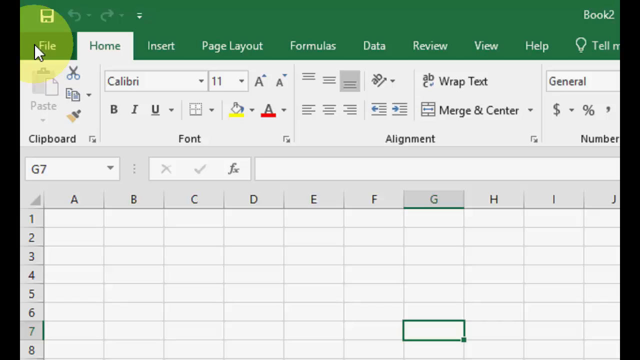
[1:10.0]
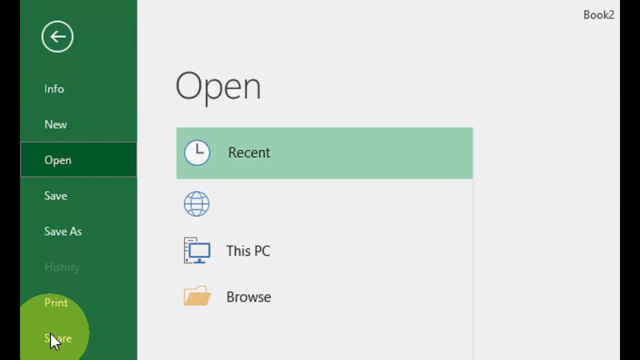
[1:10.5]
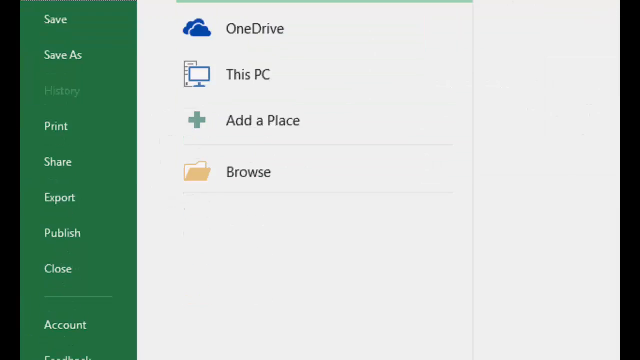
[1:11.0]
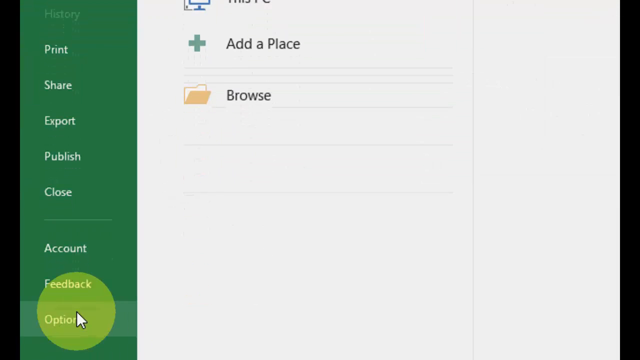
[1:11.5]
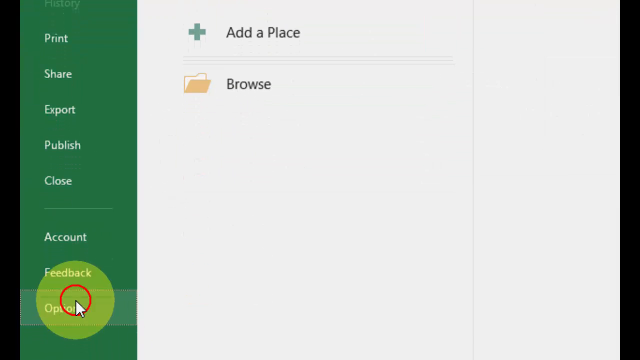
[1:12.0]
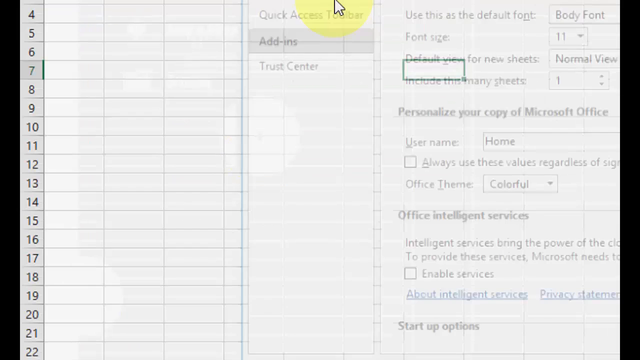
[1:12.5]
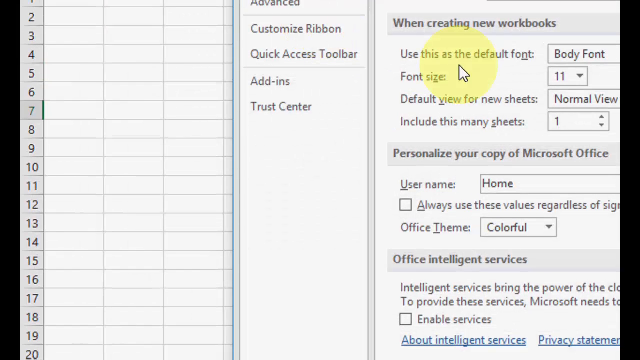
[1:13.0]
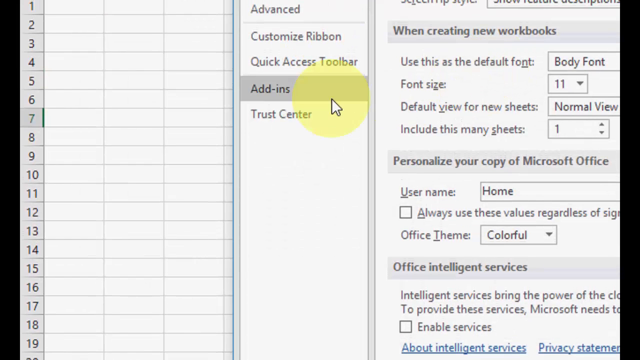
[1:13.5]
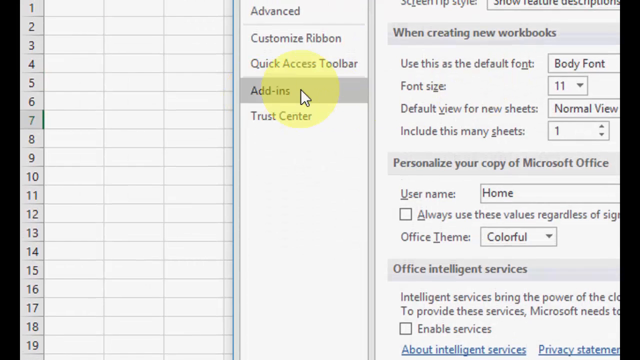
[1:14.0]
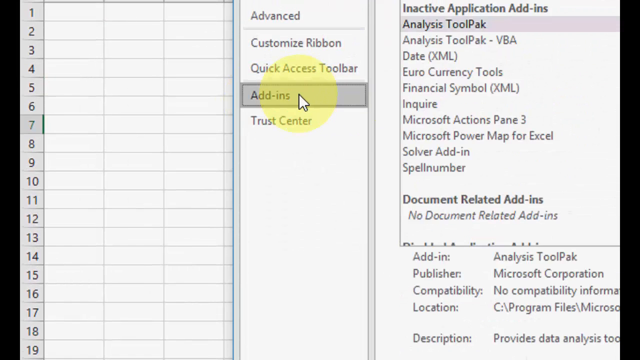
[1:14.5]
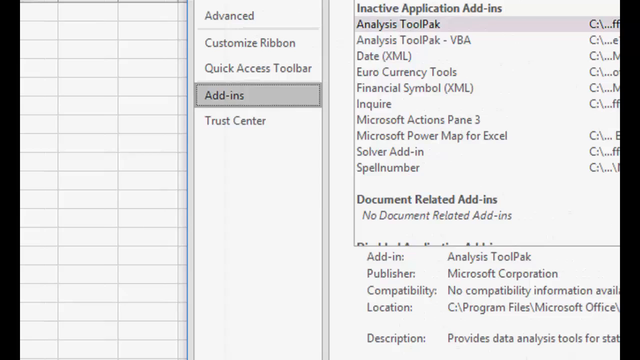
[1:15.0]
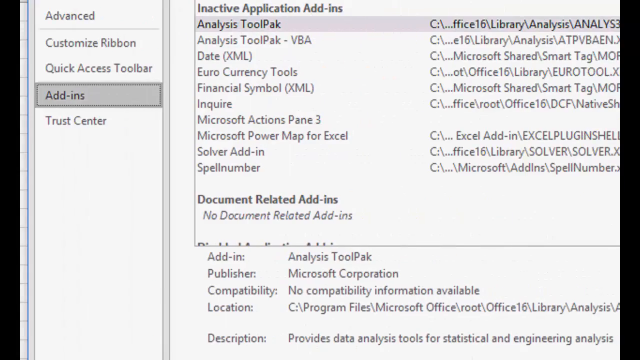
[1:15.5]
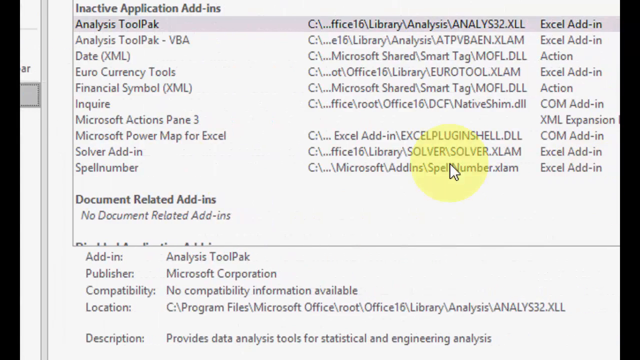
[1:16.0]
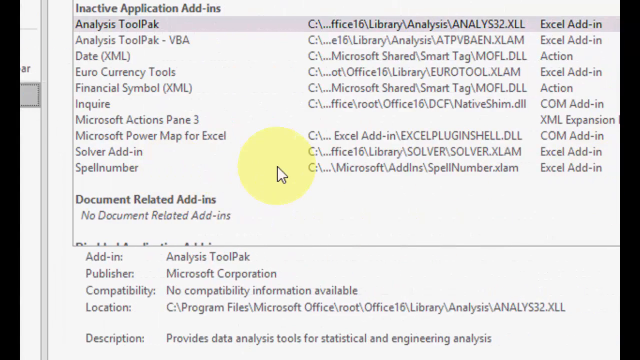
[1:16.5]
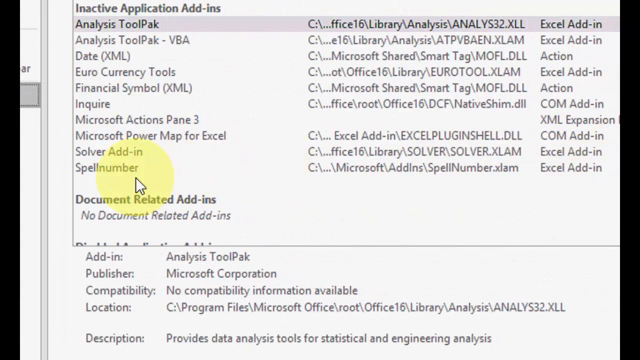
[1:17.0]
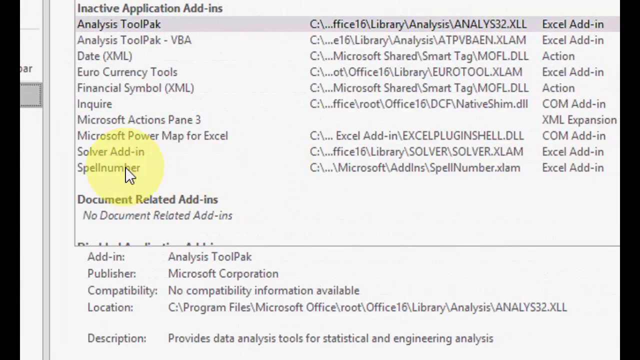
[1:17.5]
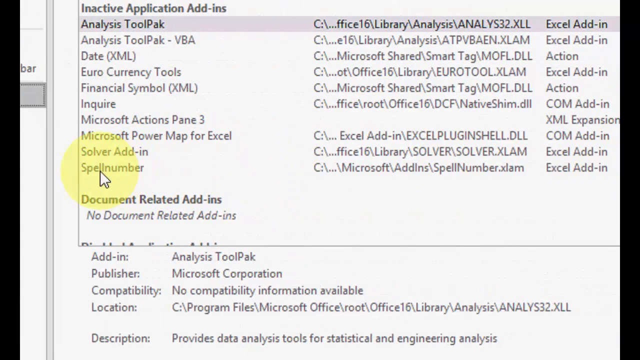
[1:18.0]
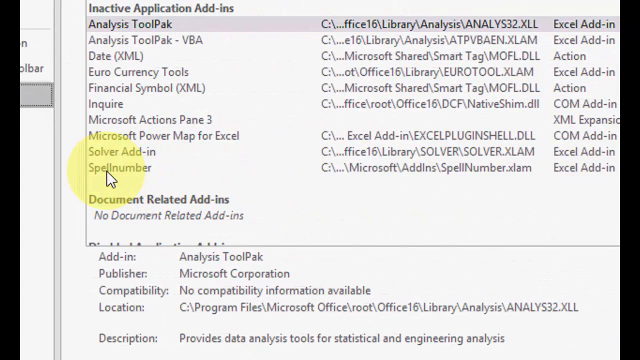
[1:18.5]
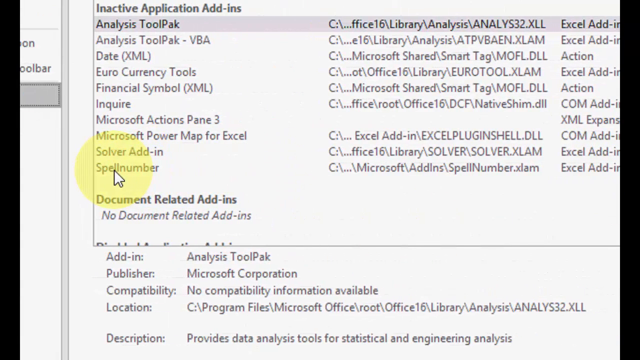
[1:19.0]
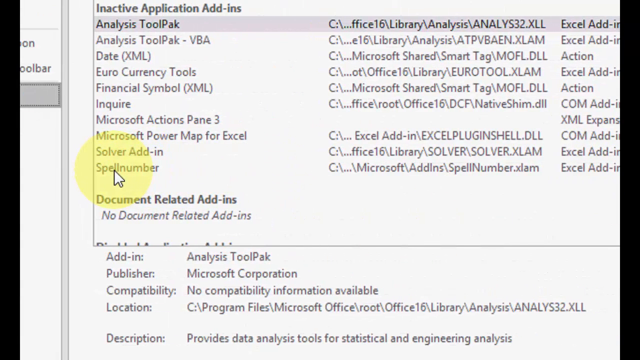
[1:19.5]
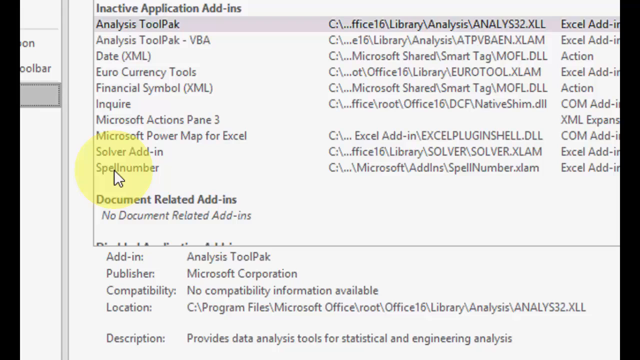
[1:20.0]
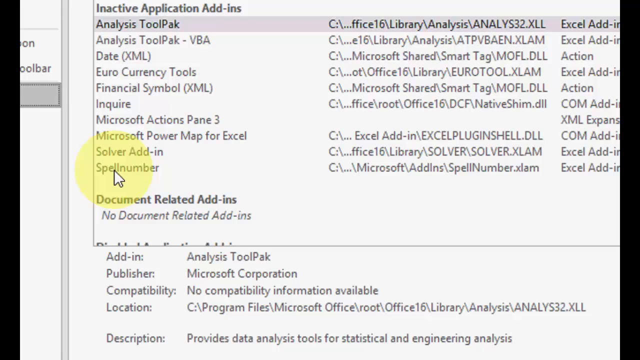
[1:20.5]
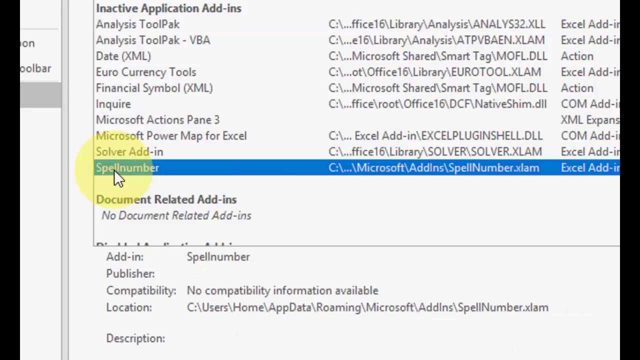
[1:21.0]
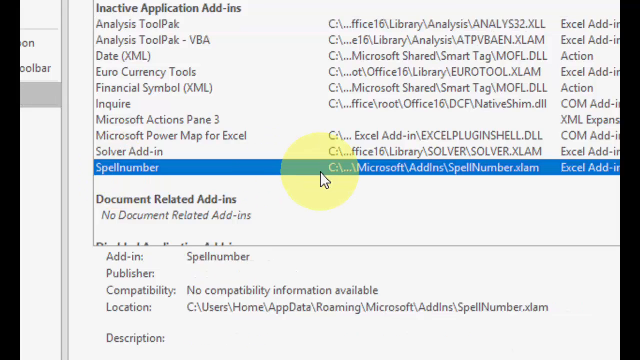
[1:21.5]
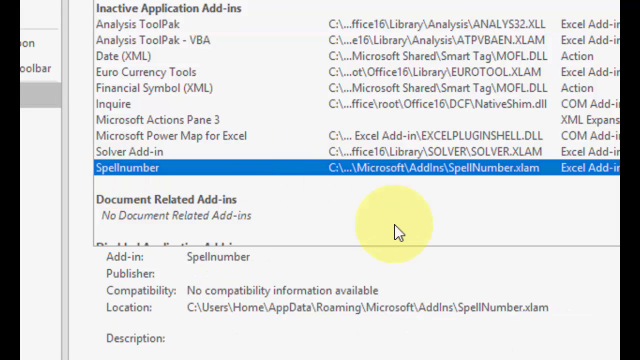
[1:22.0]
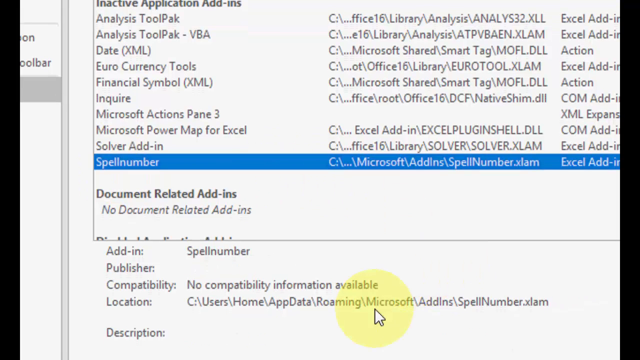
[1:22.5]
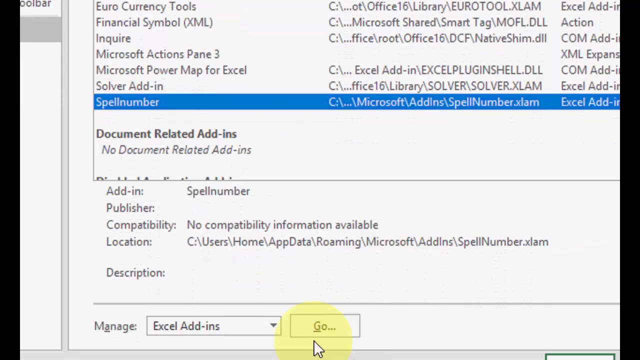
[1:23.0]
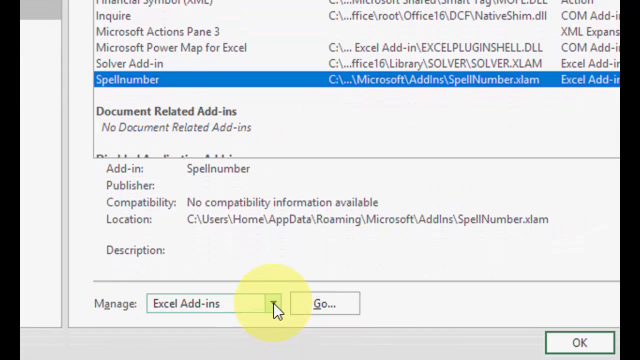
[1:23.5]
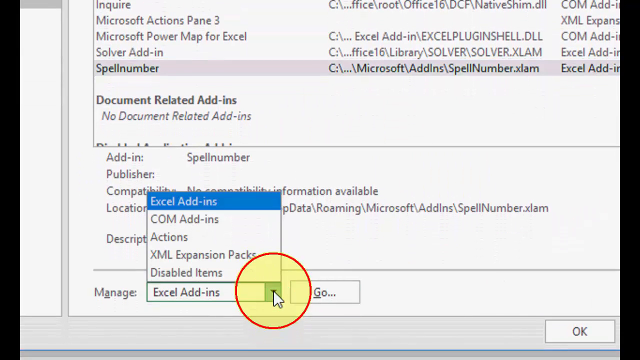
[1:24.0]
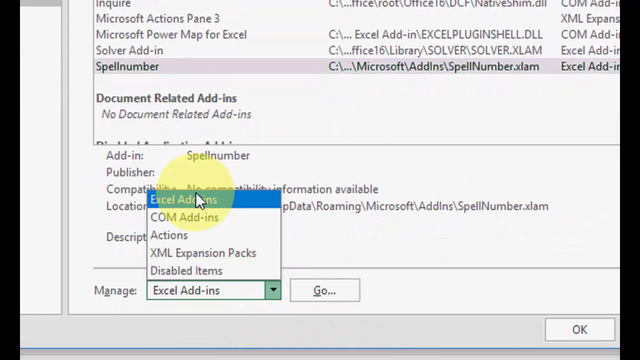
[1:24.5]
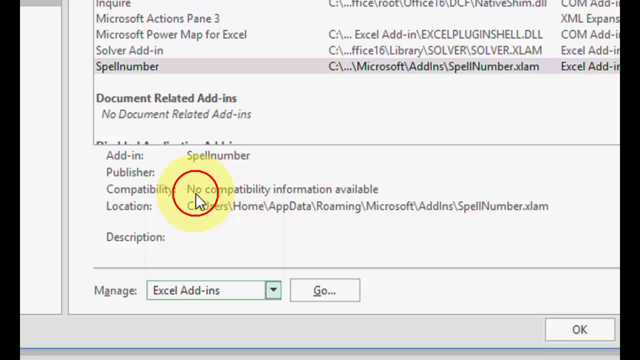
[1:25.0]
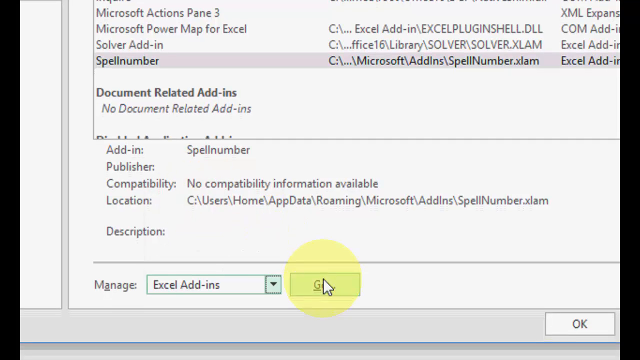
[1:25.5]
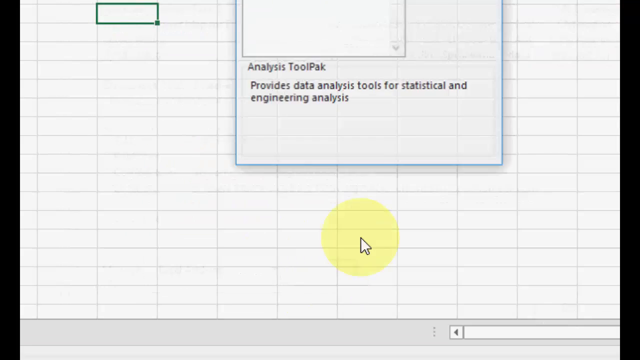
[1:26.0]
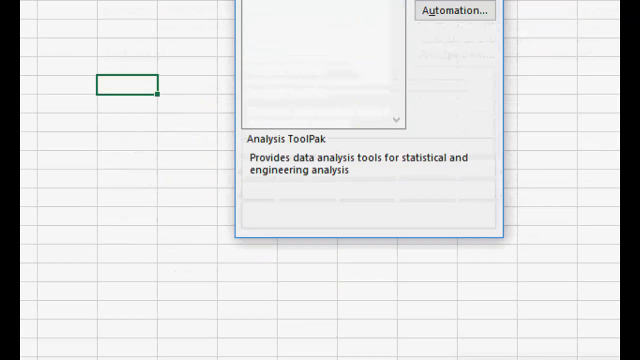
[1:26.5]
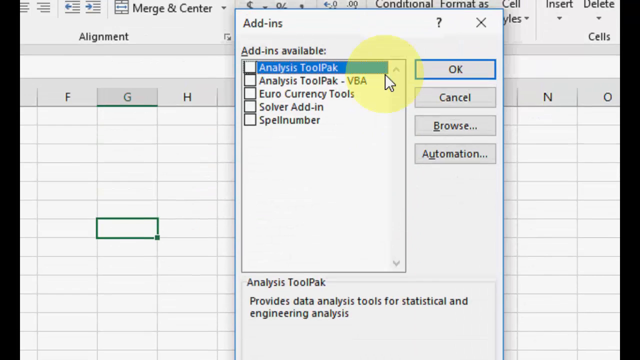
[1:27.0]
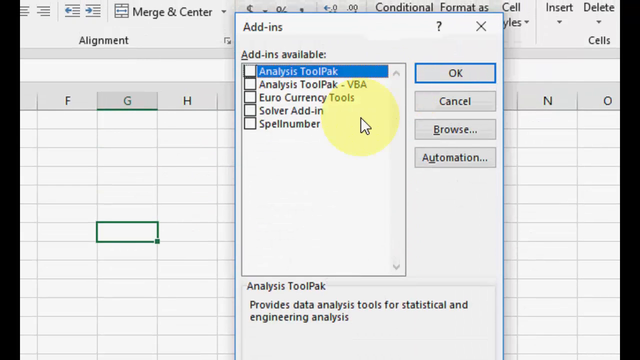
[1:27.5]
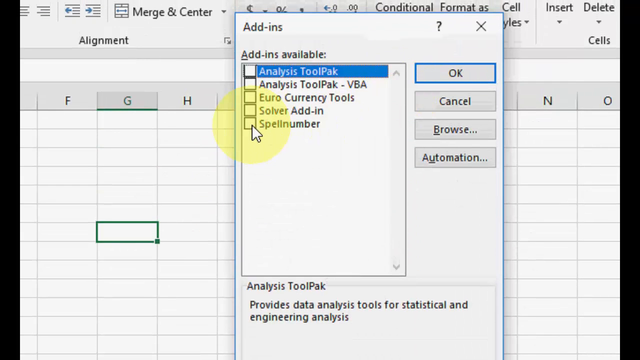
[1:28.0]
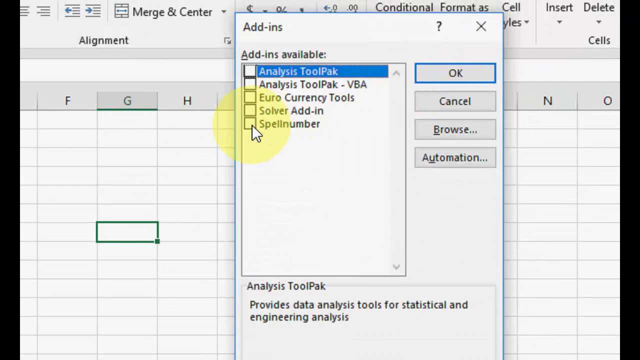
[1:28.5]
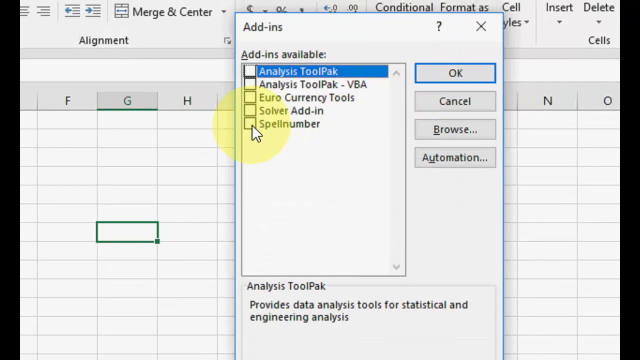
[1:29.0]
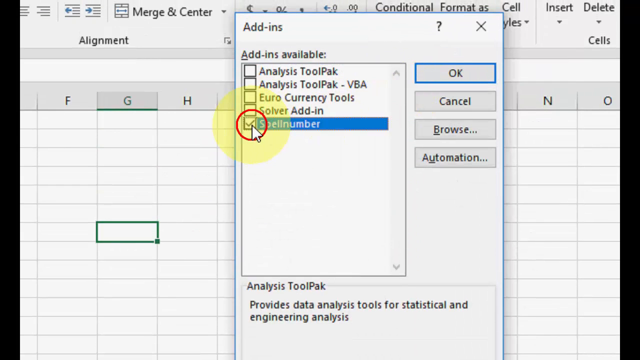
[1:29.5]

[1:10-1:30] When File is clicked, a rectangle of green menu items appears on the left side, while most of the screen on the right says "open". The menu is scrolled down and Options is clicked, giving a very zoomed-in image. The window on the left is scrolled down to add-ins, the red circle appears, and it expands when add-ins is clicked. A bunch of tools is listed along with file paths to the C Drive. The screen is moved to the left, showing all these files, and the cursor points to Spellnumber, the very last one, and highlights it. Scrolling down reveals a Manage window; the down arrow is clicked, Excel add-ins is selected, and go is clicked. At the top of the spreadsheet, an add-in window pops open with several options and check boxes, and Spellnumber is checked.